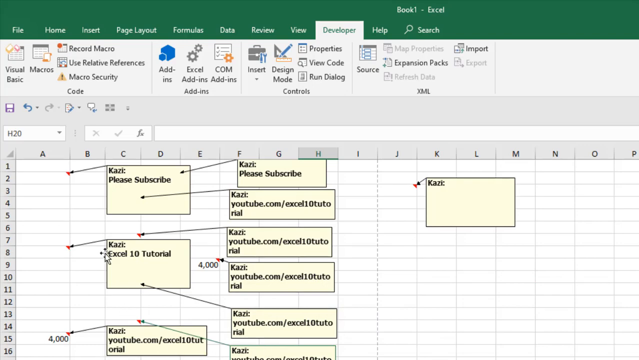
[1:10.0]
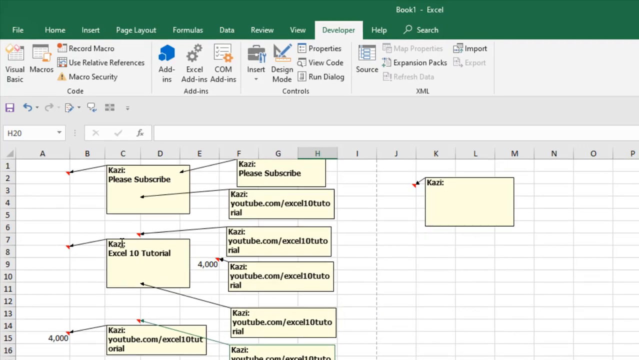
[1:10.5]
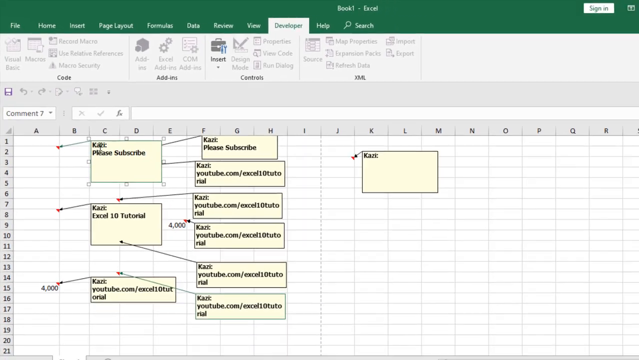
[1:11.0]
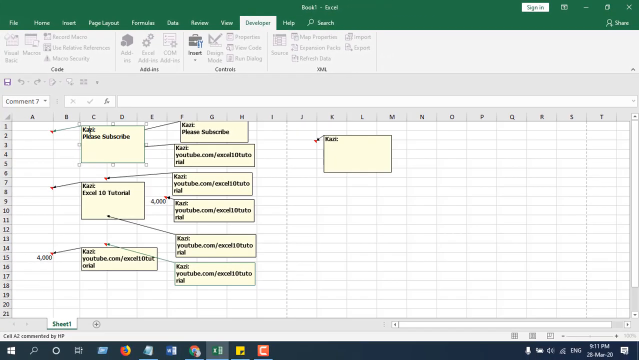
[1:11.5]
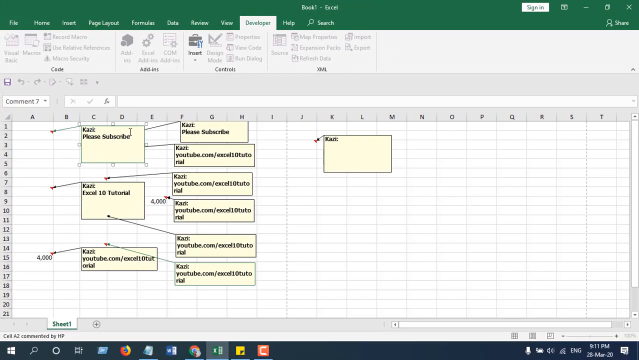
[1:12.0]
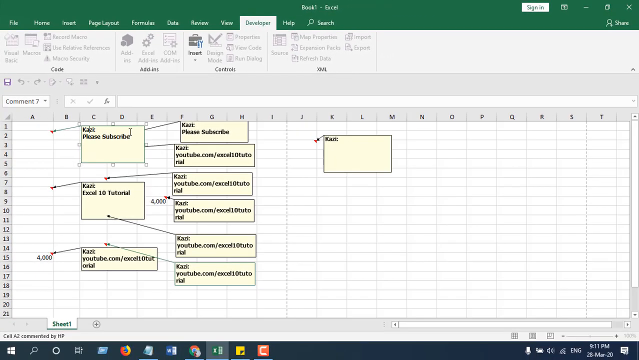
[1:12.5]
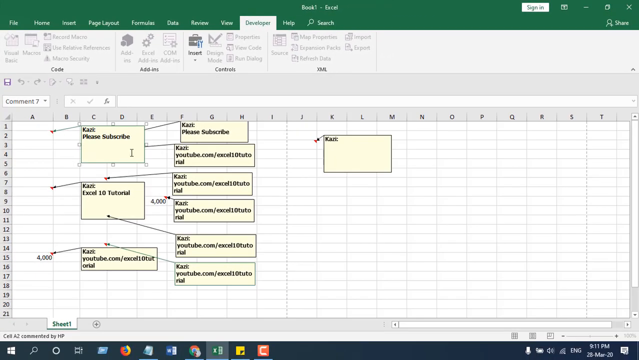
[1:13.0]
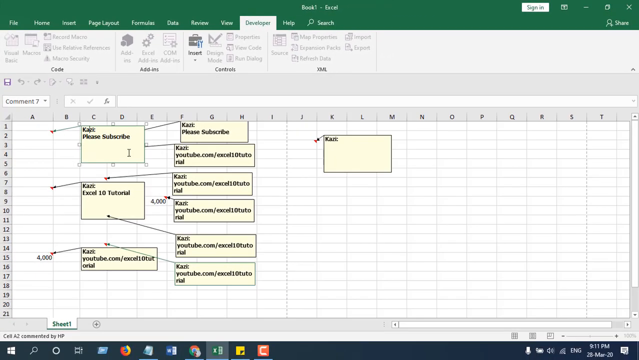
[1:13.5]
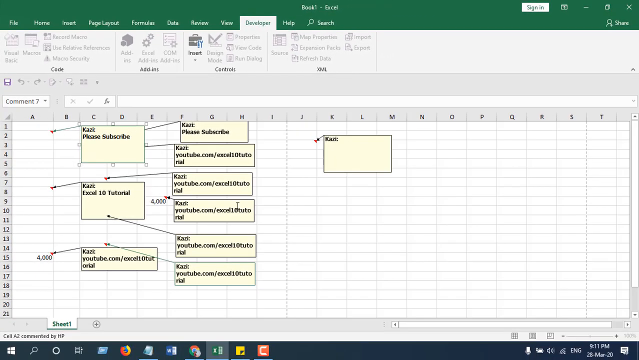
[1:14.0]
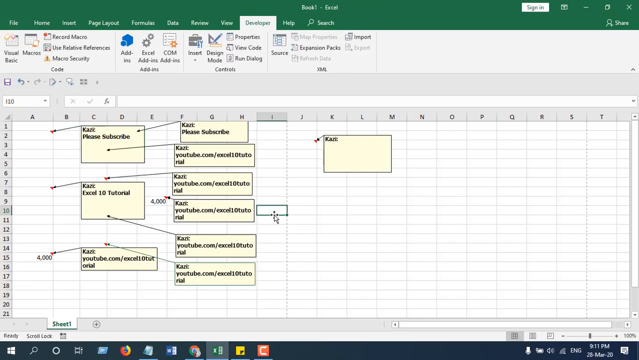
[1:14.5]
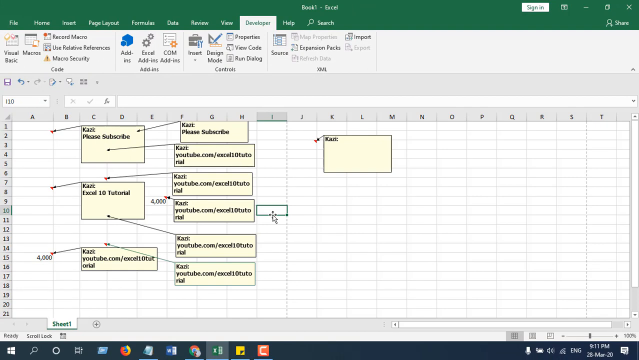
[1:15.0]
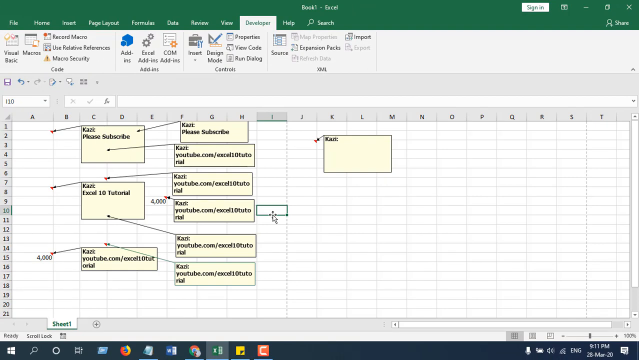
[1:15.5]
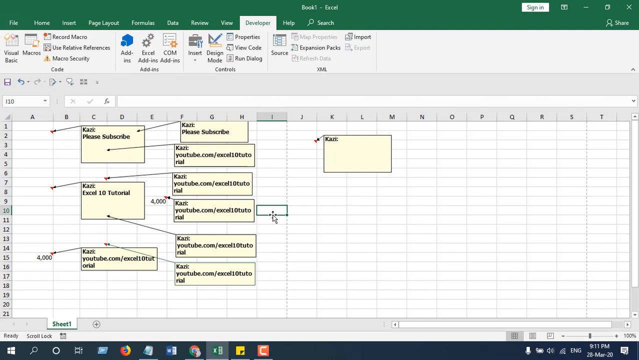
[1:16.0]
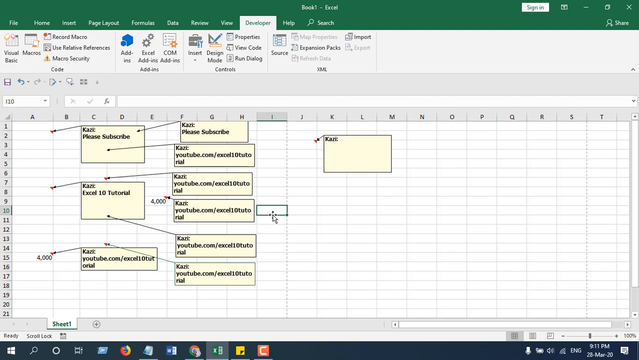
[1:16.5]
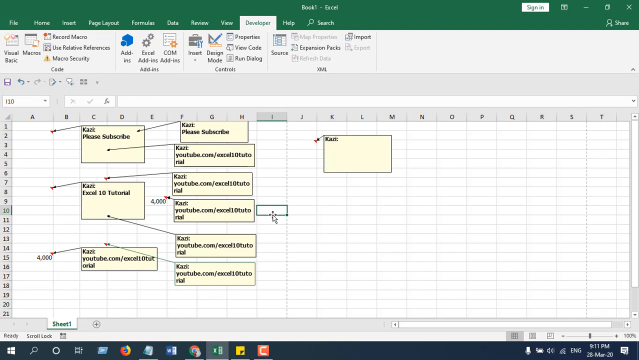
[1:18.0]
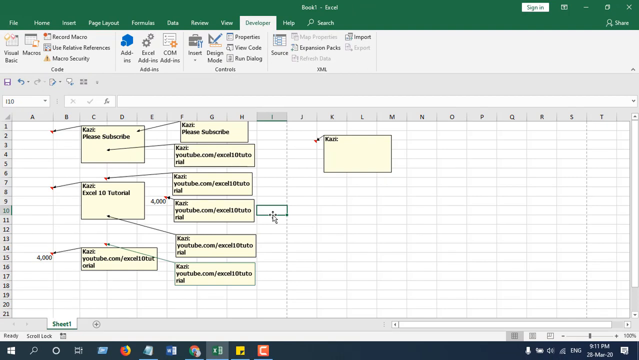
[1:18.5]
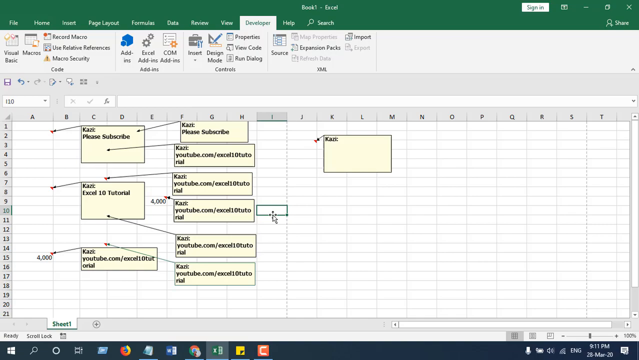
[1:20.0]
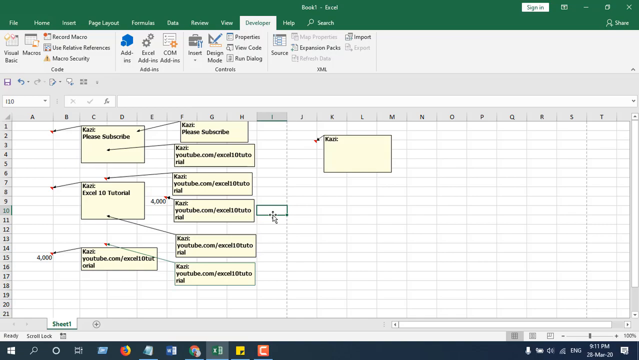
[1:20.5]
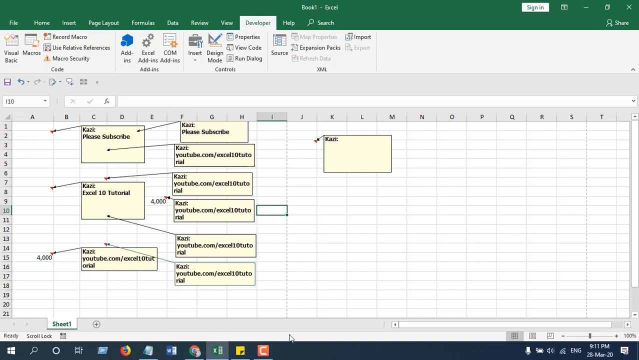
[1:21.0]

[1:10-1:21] With all the link names changed, the user does not move the mouse, which hovers over nothing. The video quality is very low, and nothing changes beyond the completed name change.